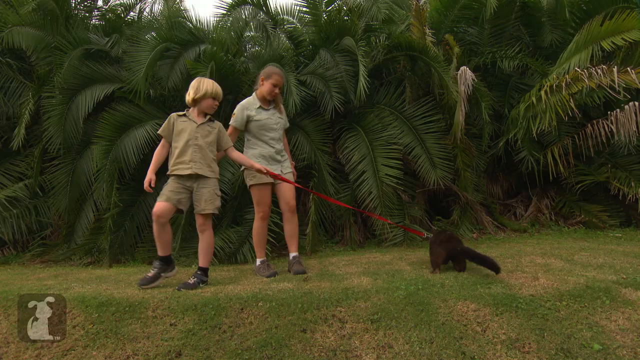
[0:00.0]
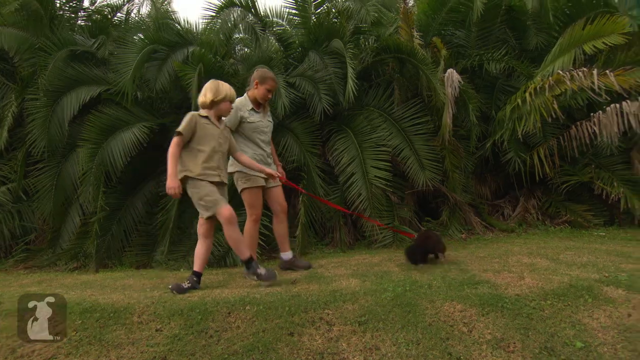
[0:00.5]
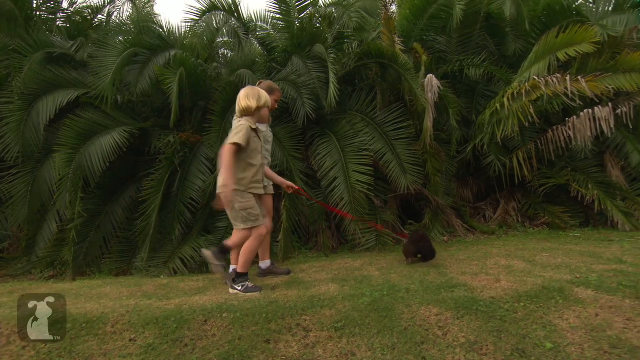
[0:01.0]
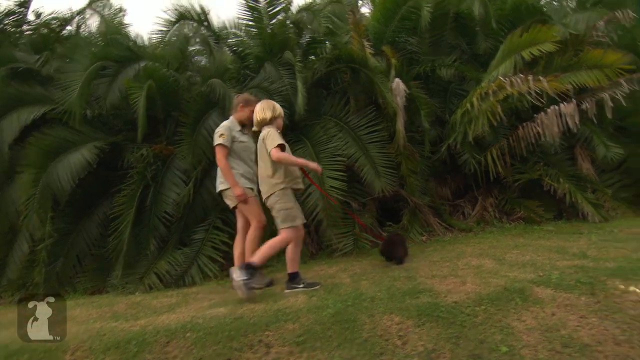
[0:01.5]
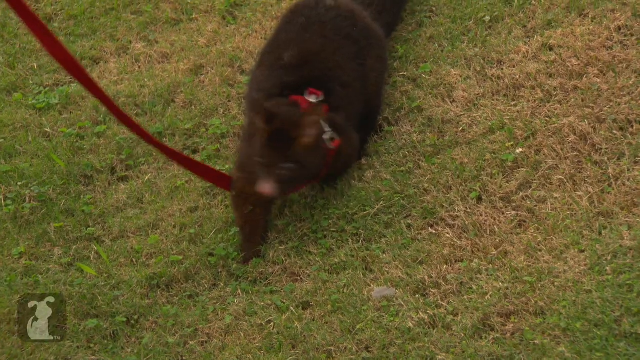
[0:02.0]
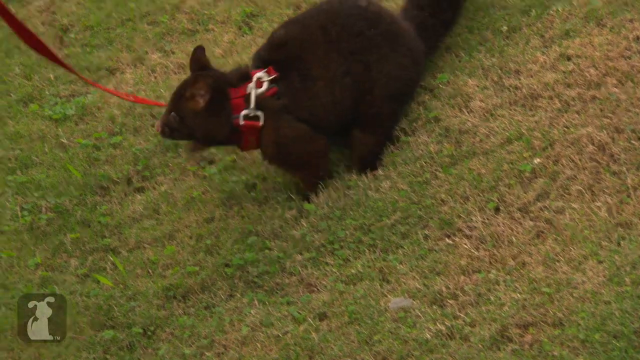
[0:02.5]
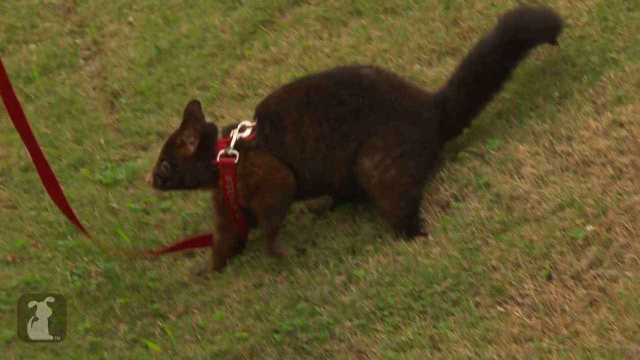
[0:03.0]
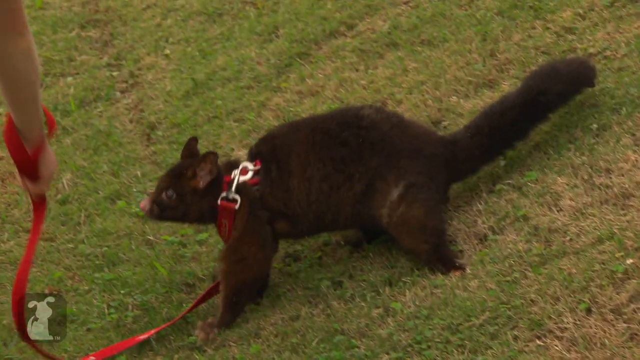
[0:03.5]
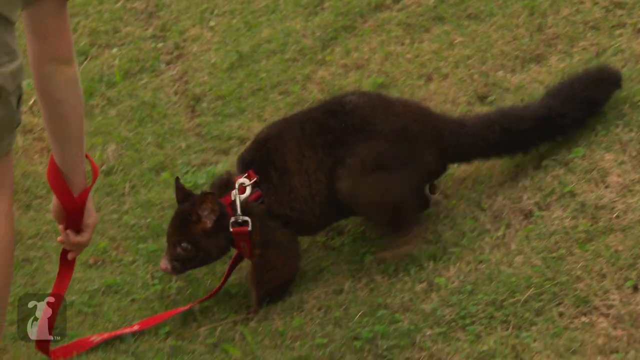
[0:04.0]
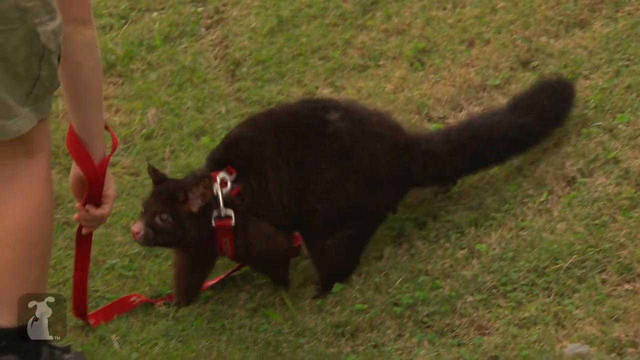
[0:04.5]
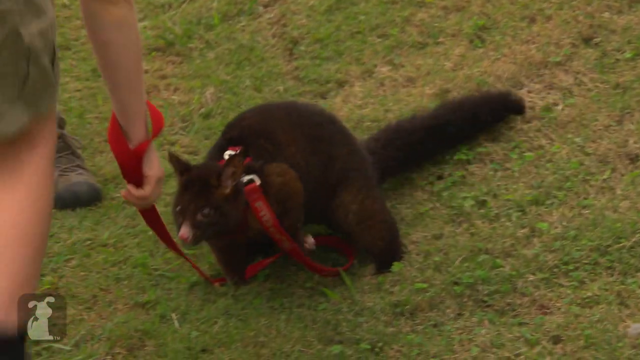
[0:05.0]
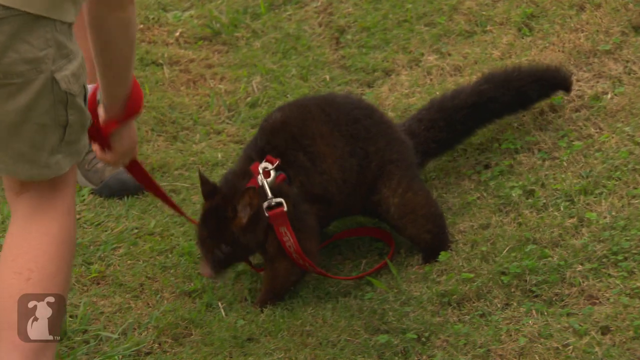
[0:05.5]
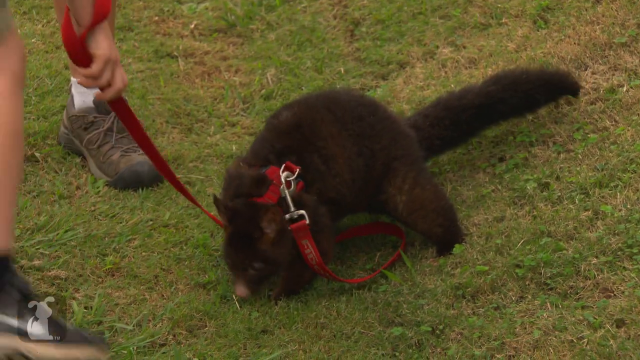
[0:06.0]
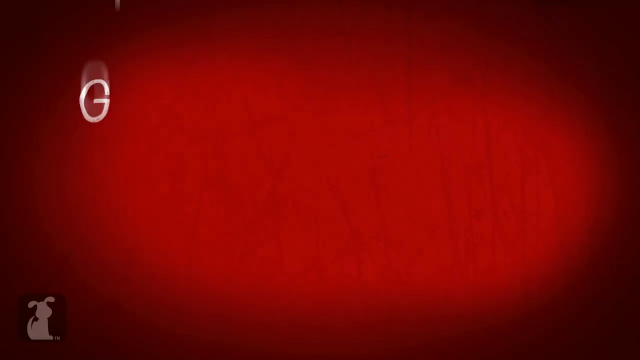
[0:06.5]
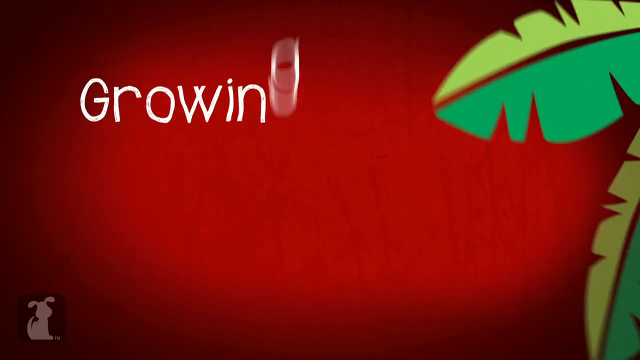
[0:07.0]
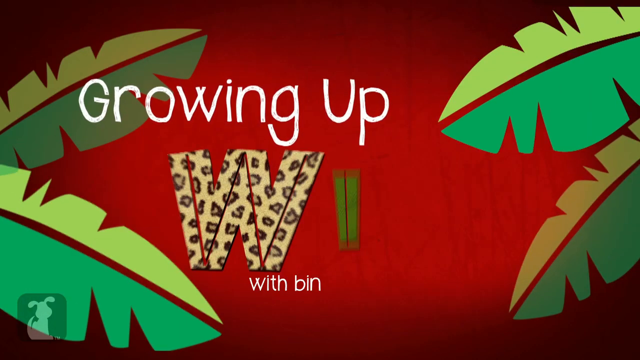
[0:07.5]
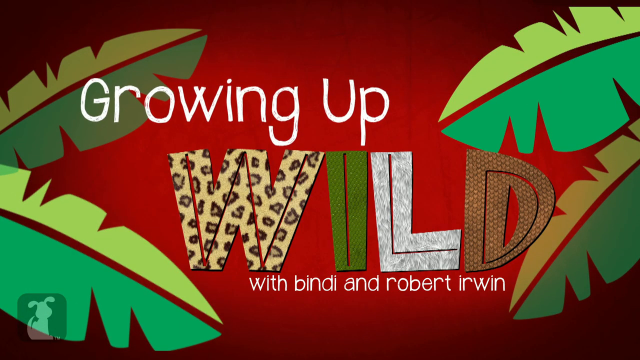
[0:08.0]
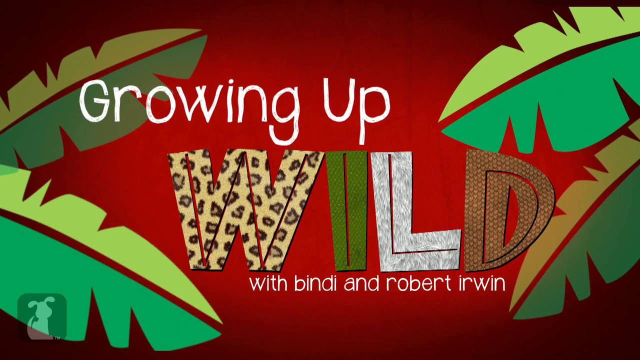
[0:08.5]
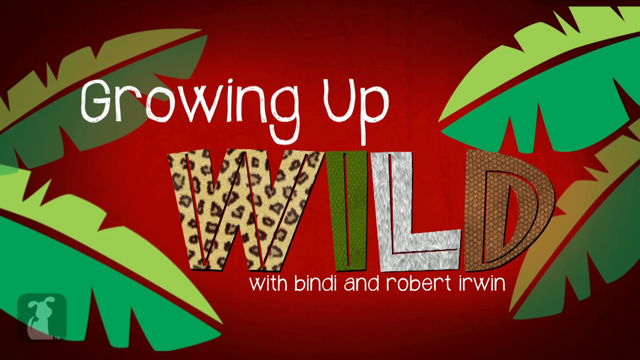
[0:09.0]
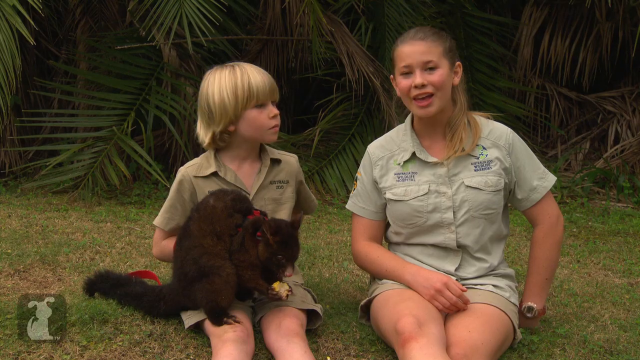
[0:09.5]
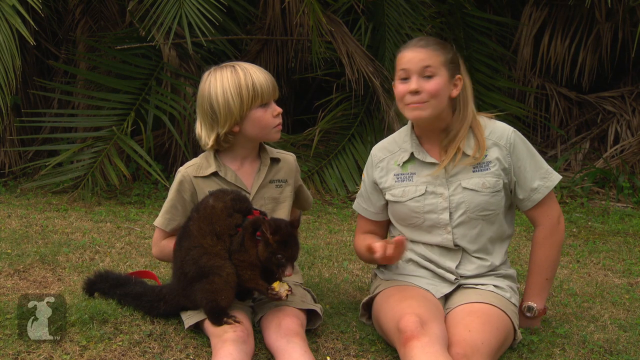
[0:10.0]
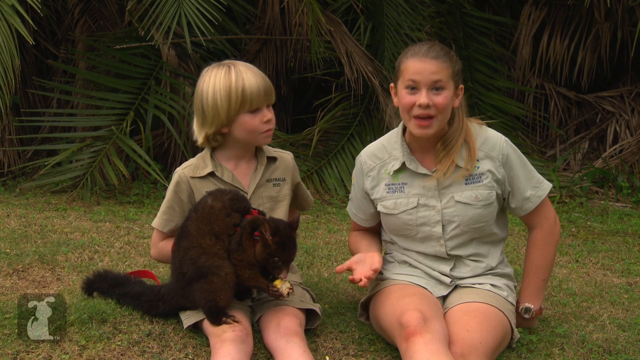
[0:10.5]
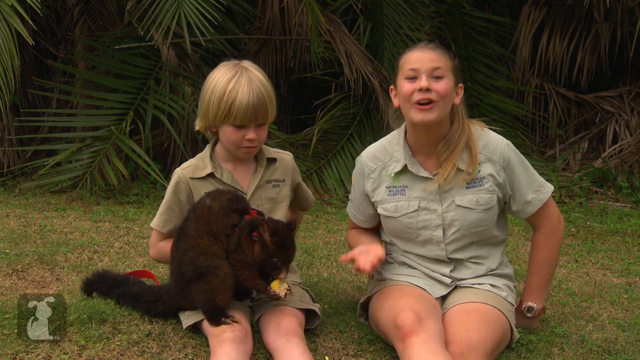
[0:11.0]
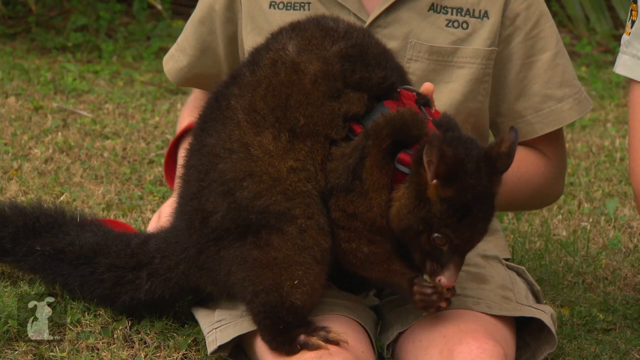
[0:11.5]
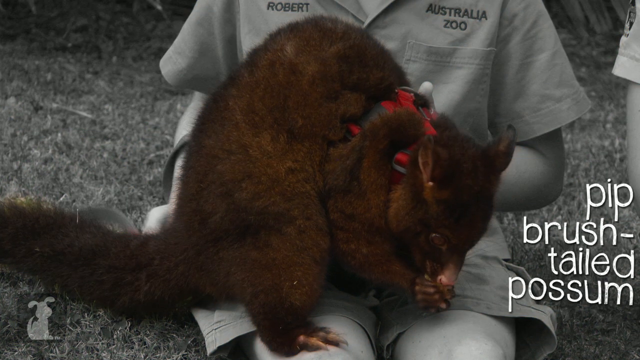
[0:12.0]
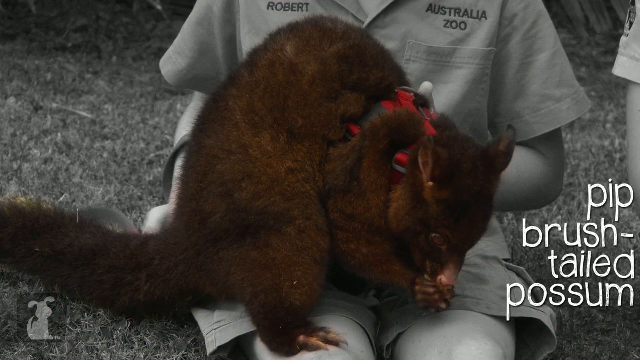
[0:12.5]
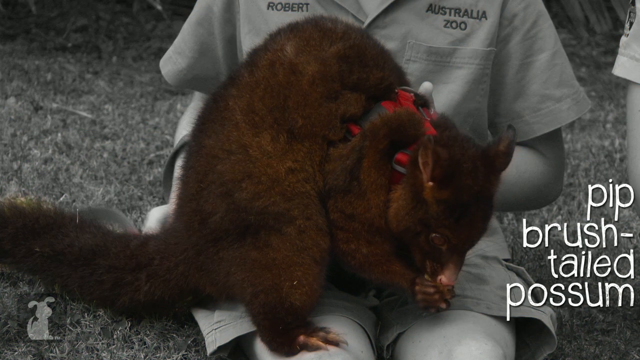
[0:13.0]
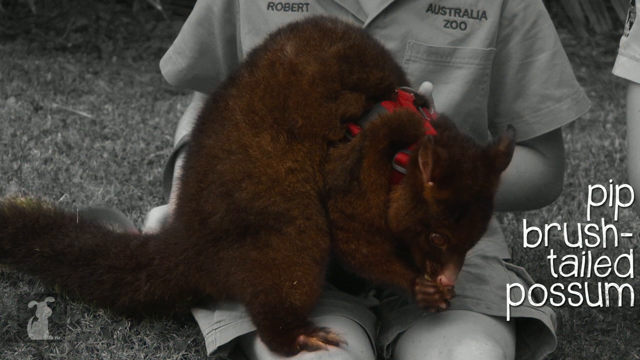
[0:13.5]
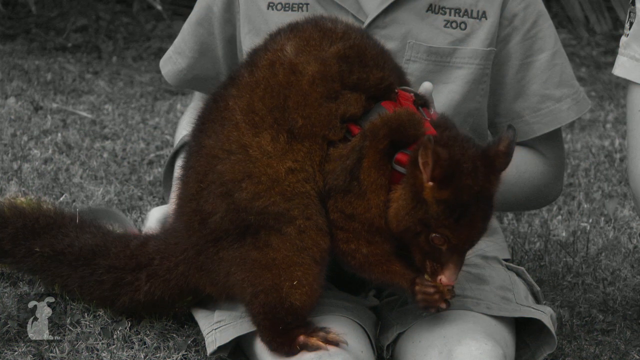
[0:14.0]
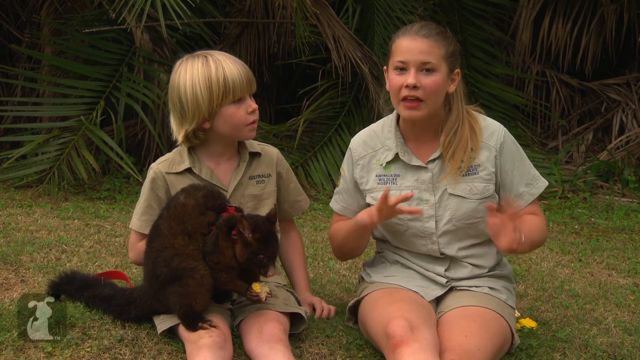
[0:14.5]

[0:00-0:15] In an outdoor, very tropical setting, a young boy and a young girl play with a very small, very furry wild animal on a leash. They walk it around and talk about the animal. A transition scene reads "growing up wild with Bindy and Irvin," and on-screen text identifies the animal as a "pip-tailed possum." An icon shows that viewers can subscribe to the channel.